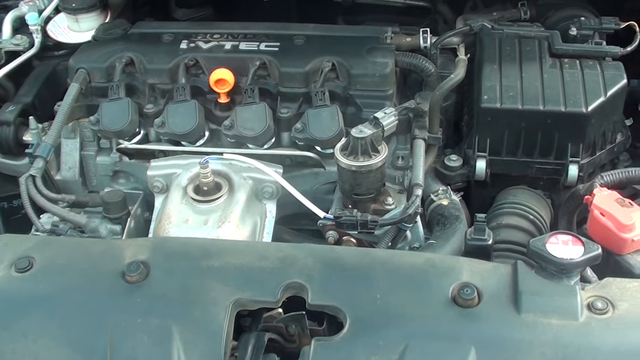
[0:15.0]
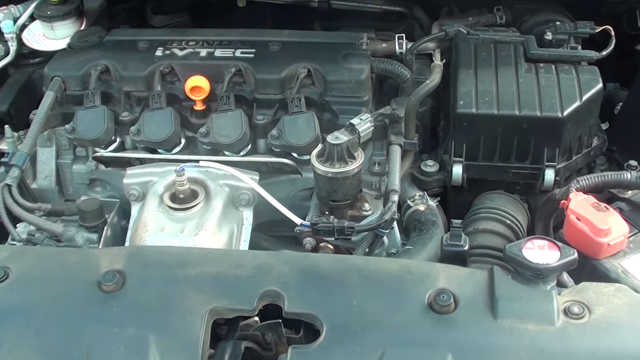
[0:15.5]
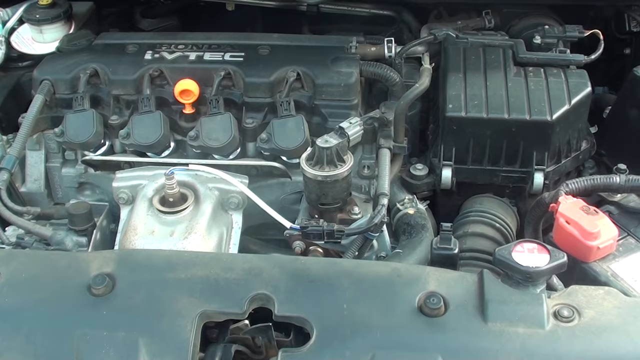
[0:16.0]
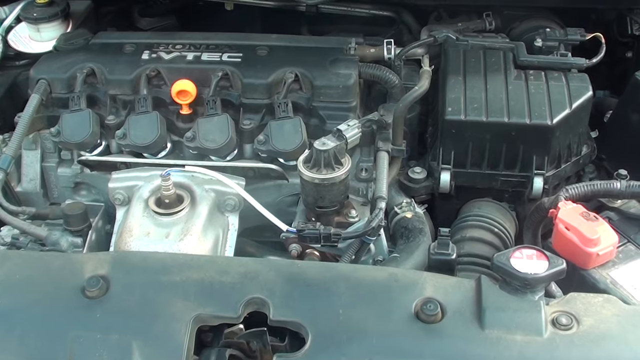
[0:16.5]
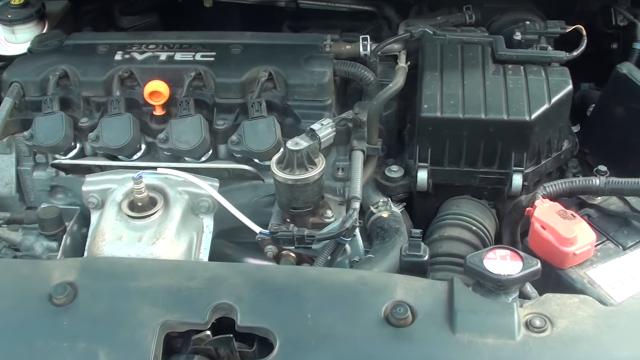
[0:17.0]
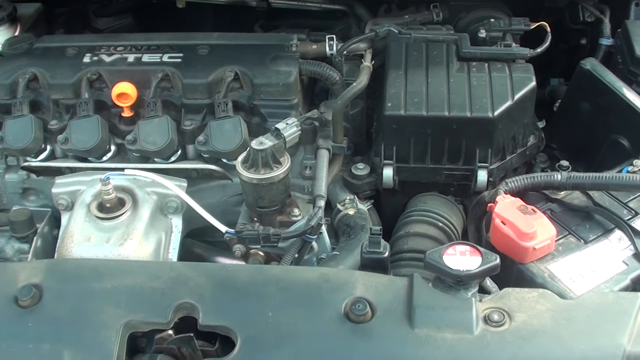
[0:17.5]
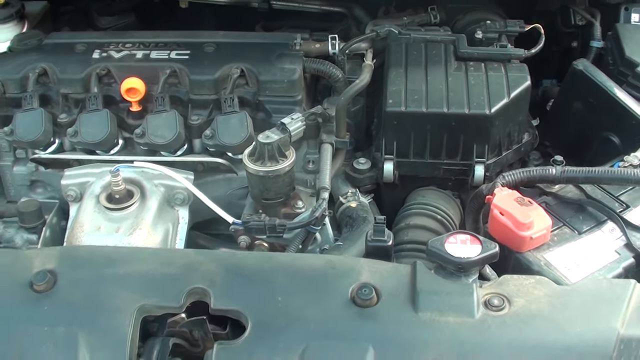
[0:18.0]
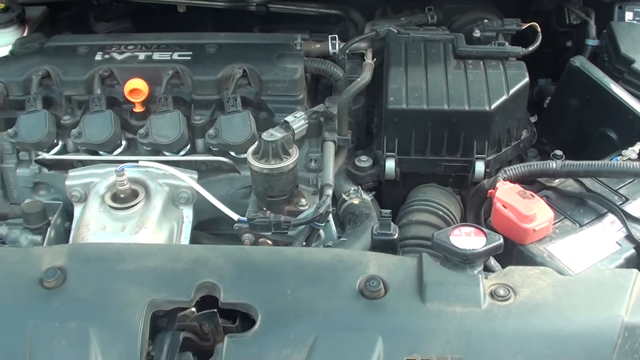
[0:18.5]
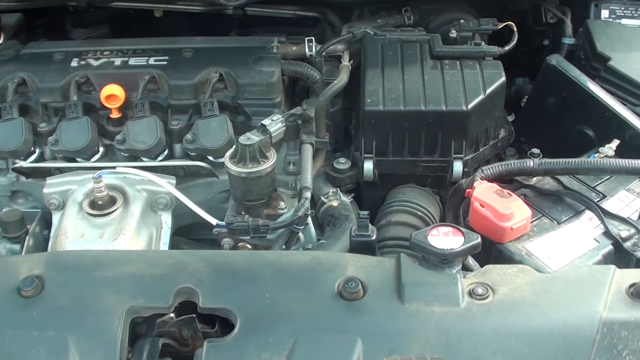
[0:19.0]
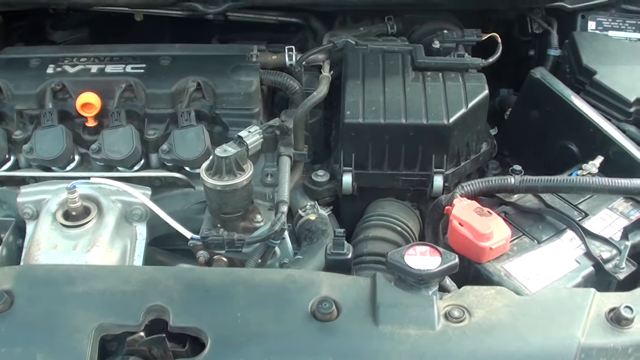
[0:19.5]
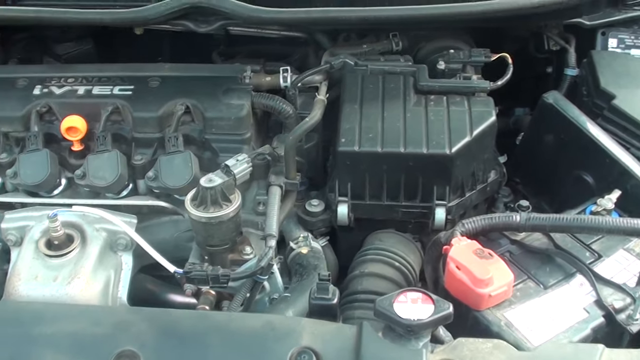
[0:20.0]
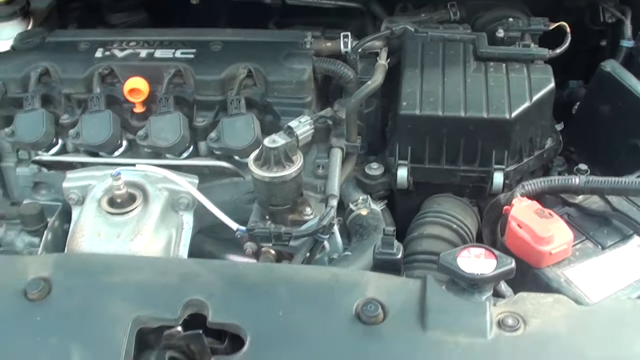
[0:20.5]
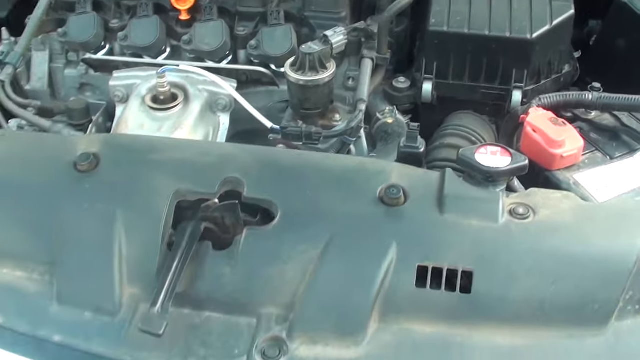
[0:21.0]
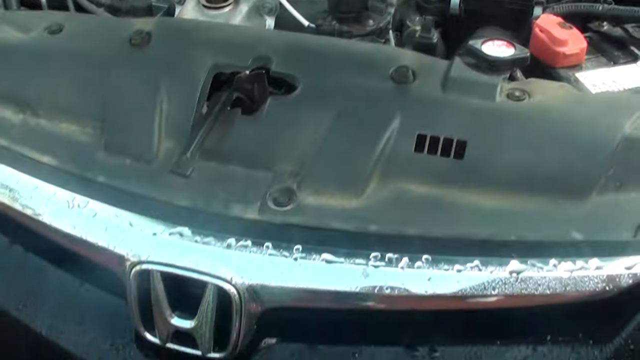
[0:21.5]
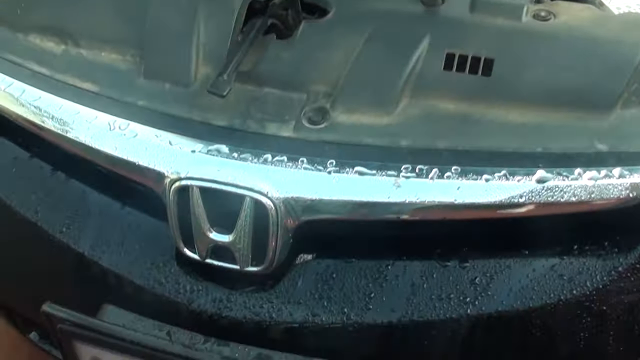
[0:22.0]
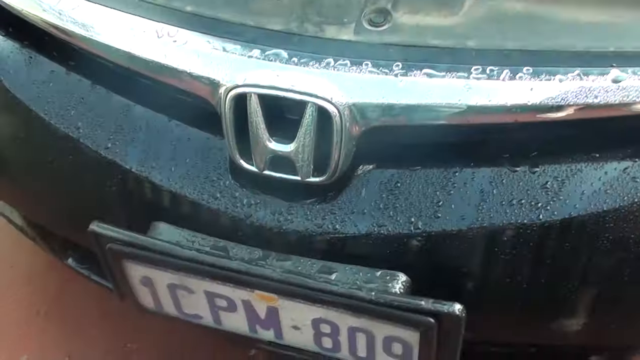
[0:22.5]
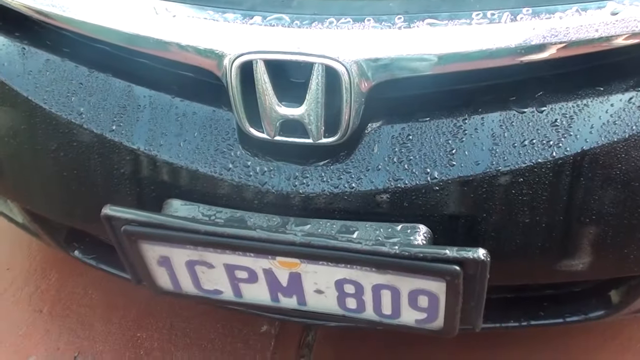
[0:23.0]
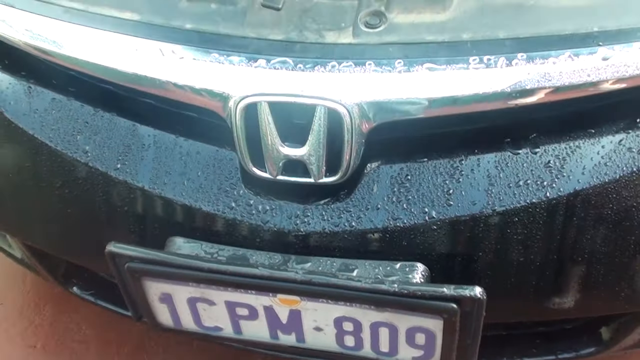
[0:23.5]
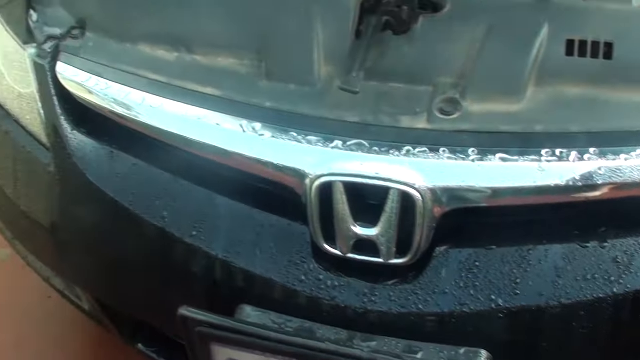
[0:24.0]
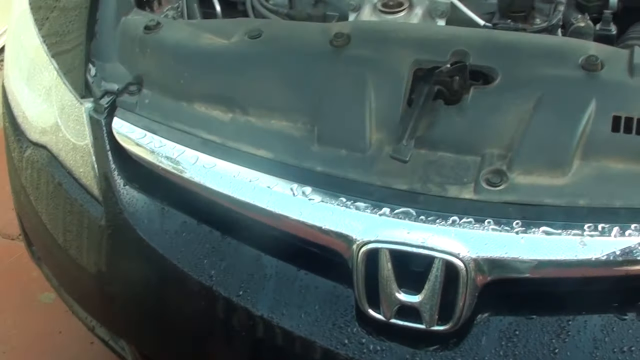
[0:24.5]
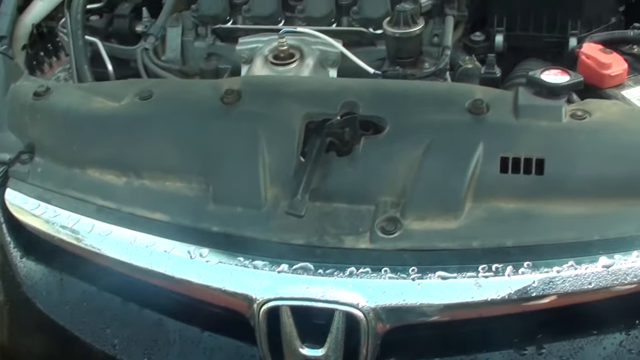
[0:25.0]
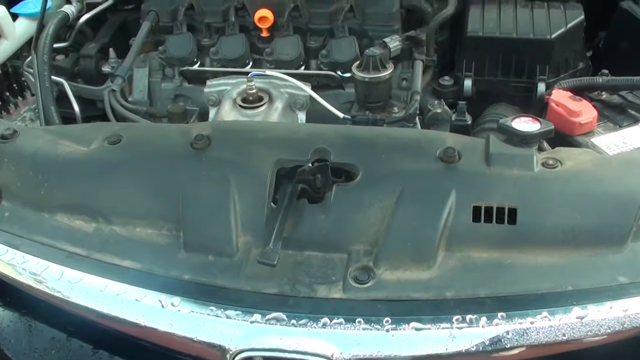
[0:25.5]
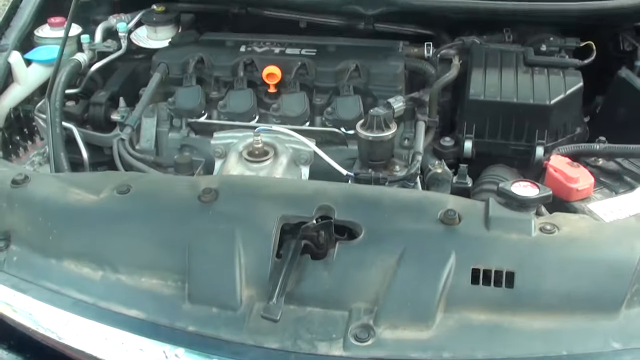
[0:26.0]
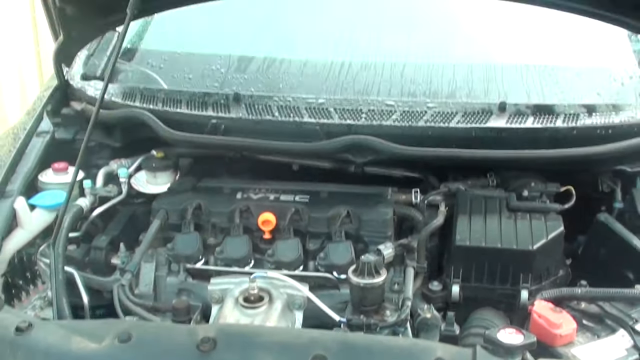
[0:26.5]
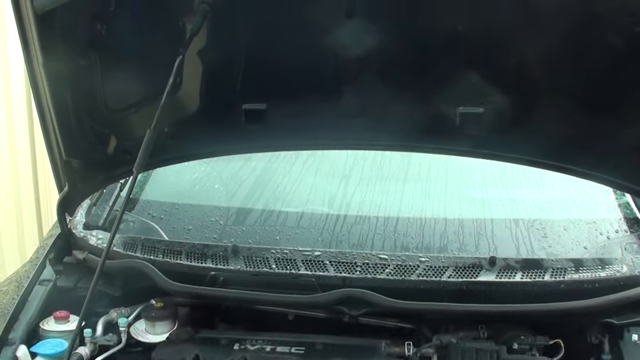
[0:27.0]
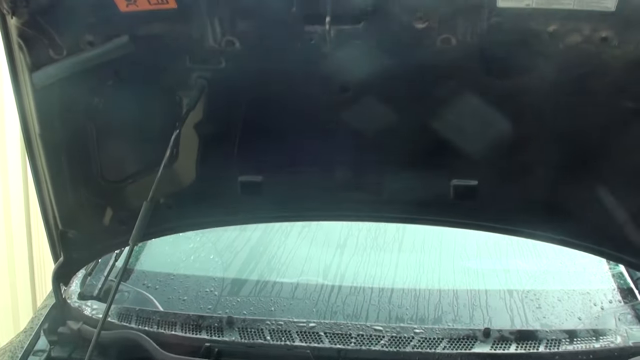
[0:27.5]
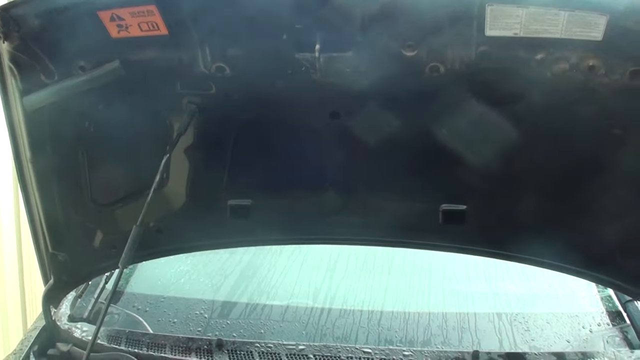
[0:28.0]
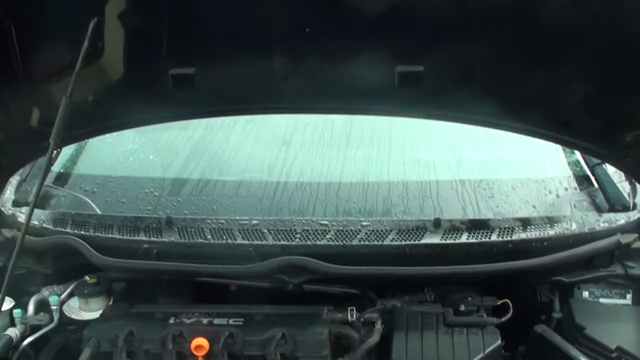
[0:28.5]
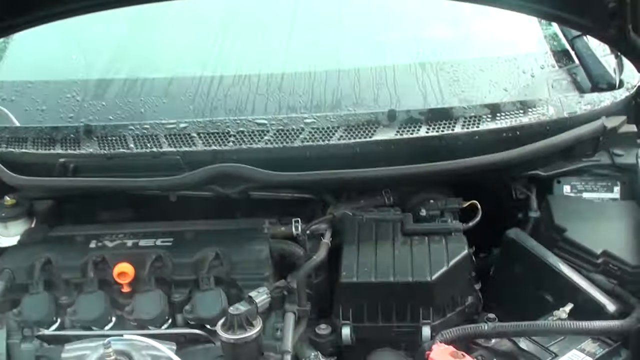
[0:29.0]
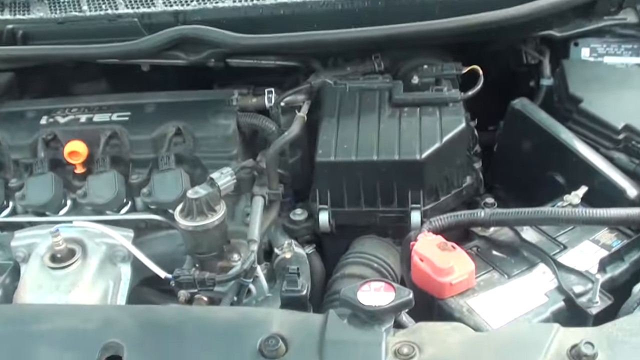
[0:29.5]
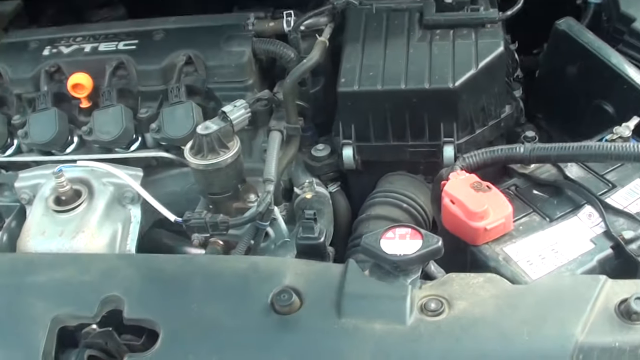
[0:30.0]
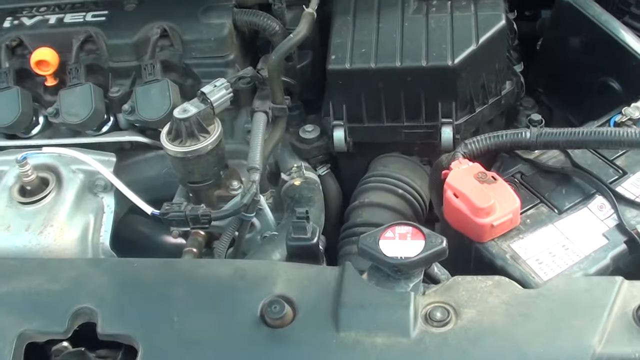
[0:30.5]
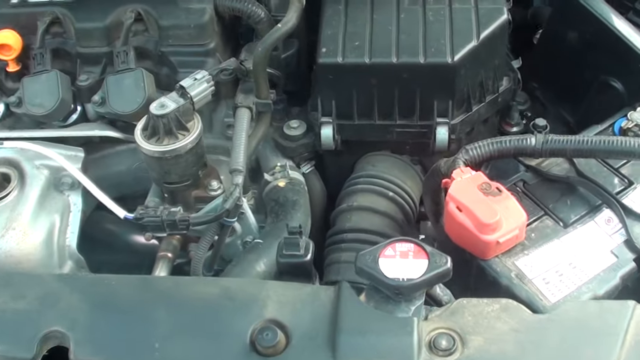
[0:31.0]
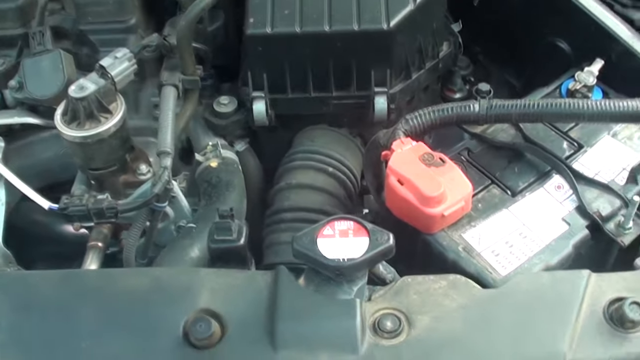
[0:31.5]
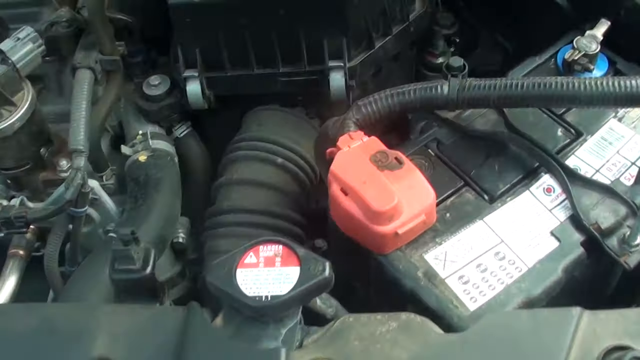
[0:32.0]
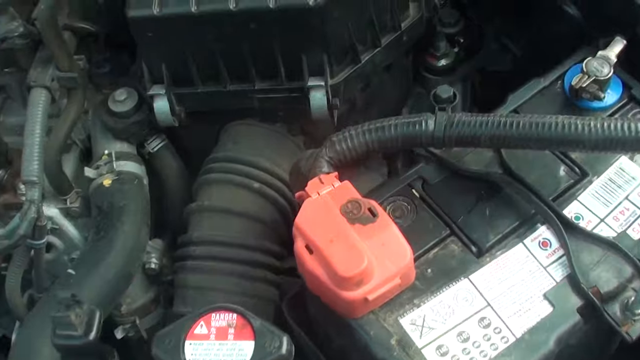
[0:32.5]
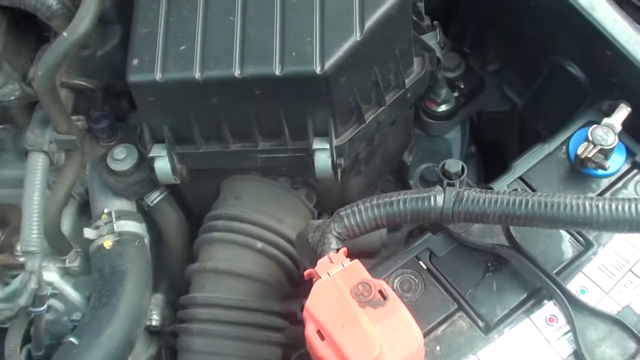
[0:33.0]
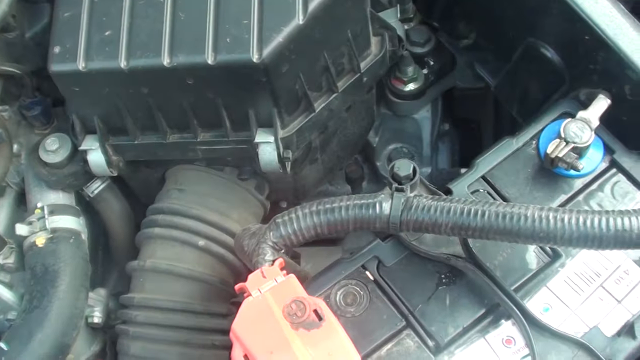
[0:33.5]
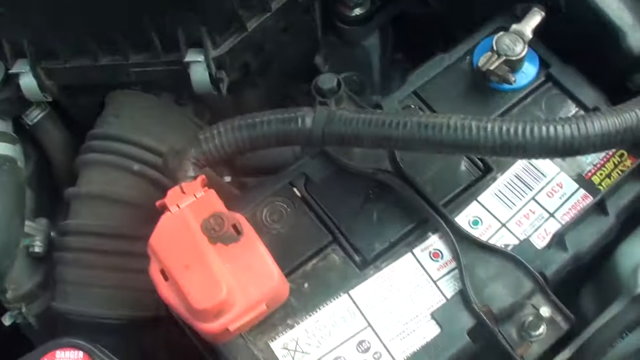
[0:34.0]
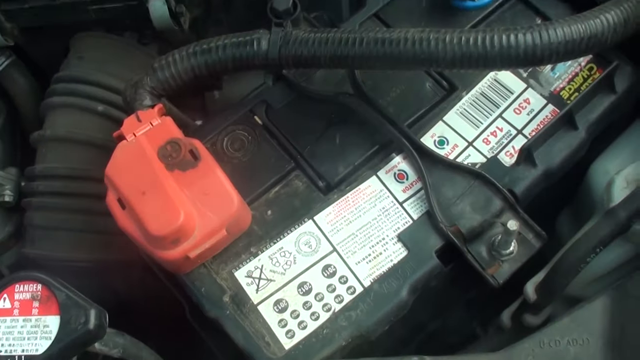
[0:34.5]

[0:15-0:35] The shot shows the inside of a Honda Civic 2007 with all its parts. The camera moves very slowly from left to right, with a lot of shaking. The camera then pulls away to show the front of the car: a silver front piece that goes underneath the hood, with the H Honda brand logo on it. Water is on the silver piece and on the front bumper. As the camera moves further away, the front bumper is shown to be black with water all over it, which looks like it is from rain. At the very bottom is a license plate holder with a license plate reading "1 CPM-809." The camera keeps moving further away, then moves to the left to show one of the lights on the left side of the Civic. It pans back up, showing the hood held up by some kind of bar on the left side of the image, then zooms into the engine again, scrolls to the right, and focuses on the battery.